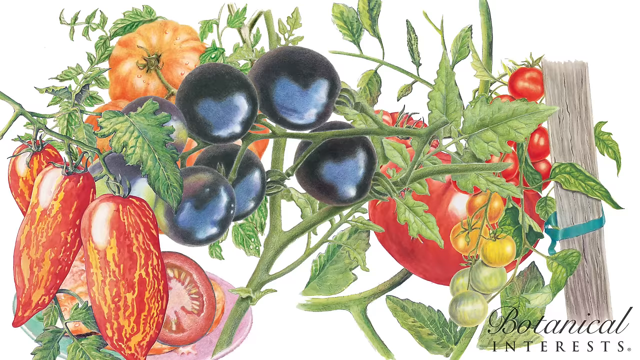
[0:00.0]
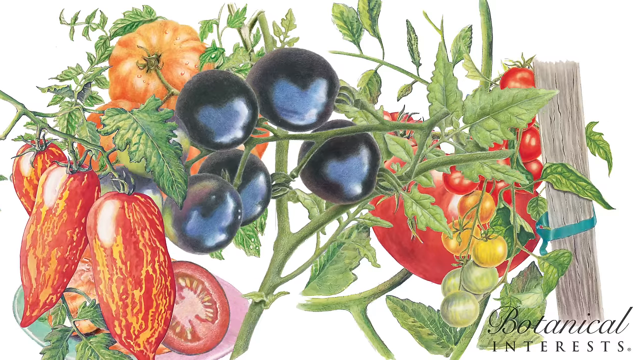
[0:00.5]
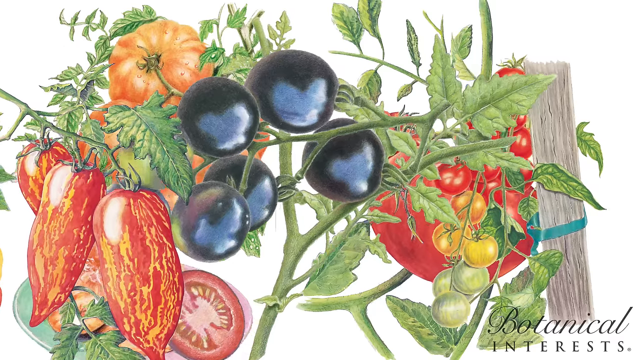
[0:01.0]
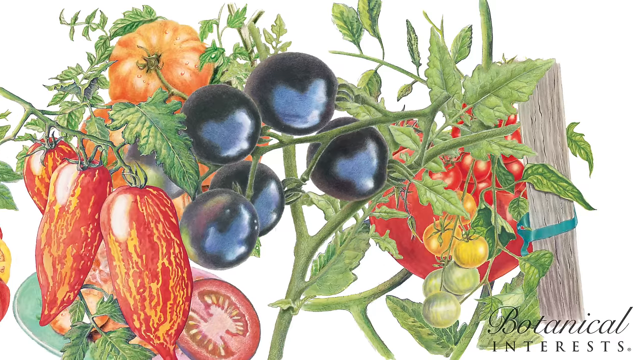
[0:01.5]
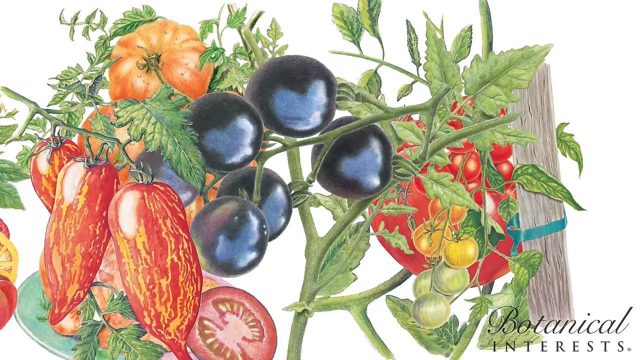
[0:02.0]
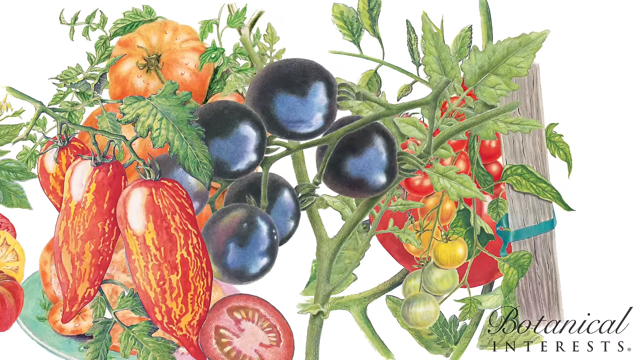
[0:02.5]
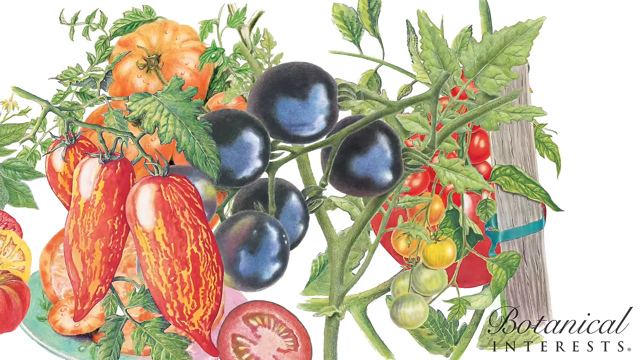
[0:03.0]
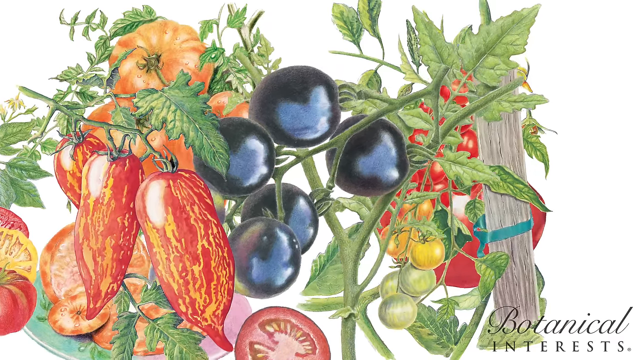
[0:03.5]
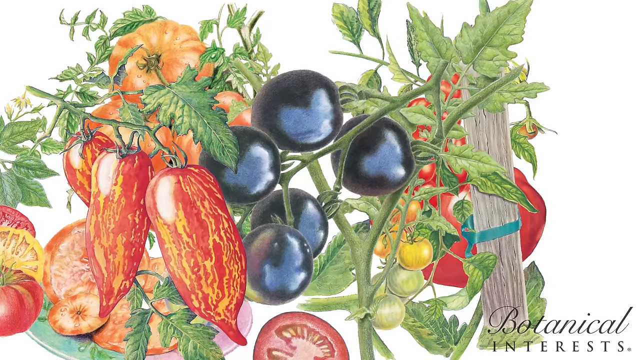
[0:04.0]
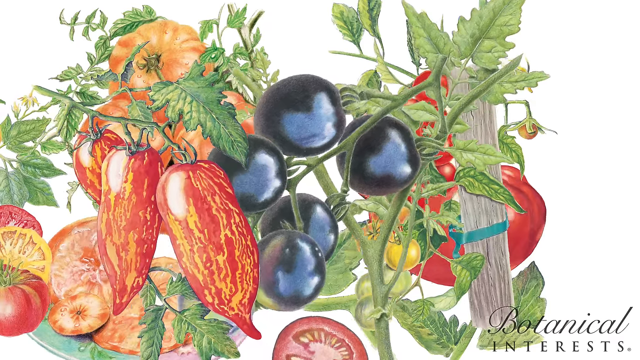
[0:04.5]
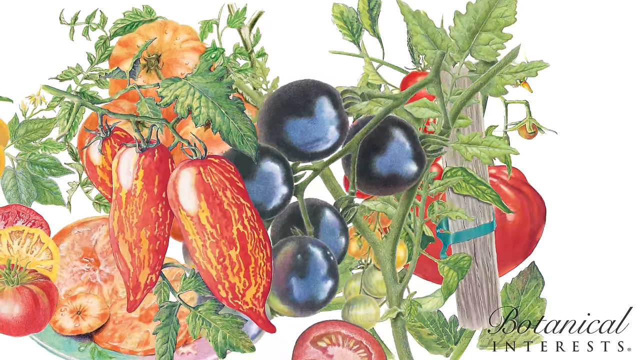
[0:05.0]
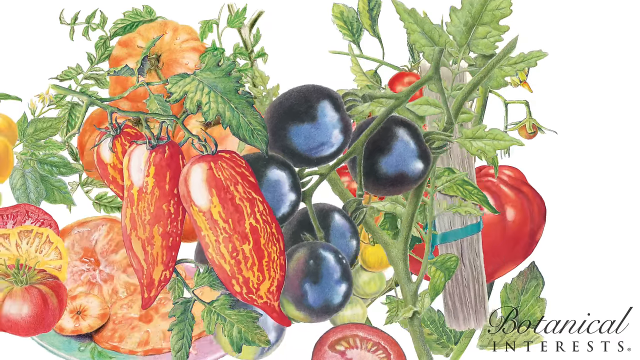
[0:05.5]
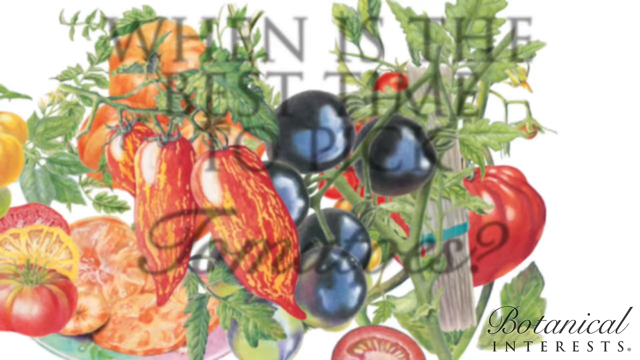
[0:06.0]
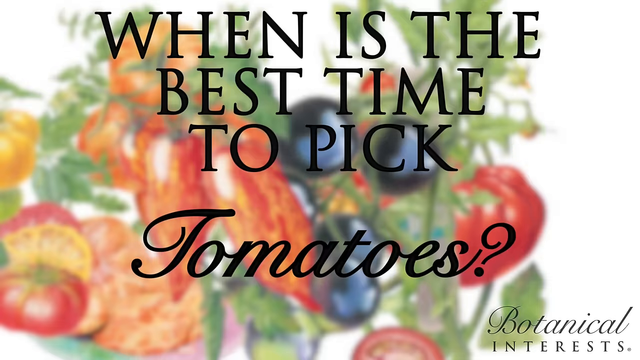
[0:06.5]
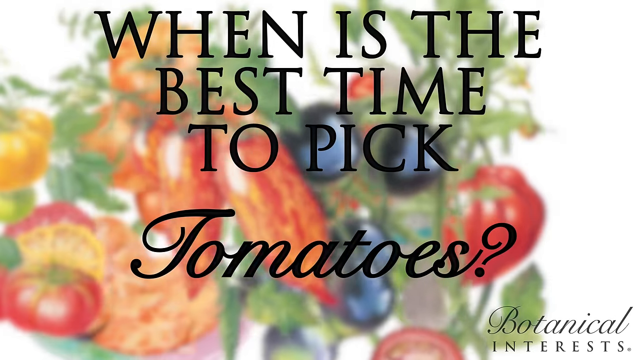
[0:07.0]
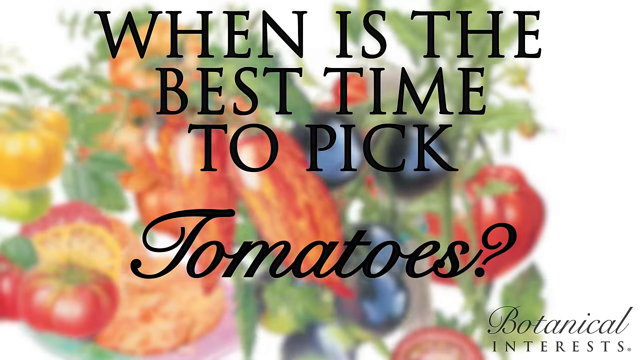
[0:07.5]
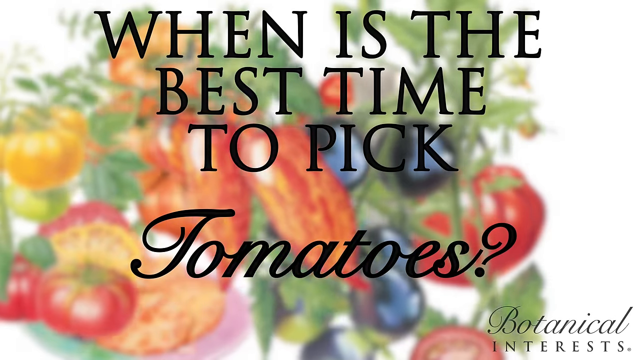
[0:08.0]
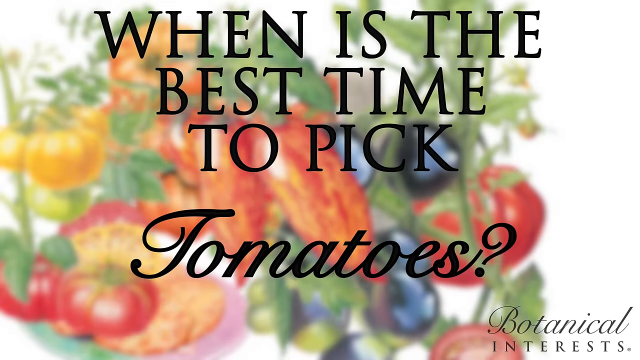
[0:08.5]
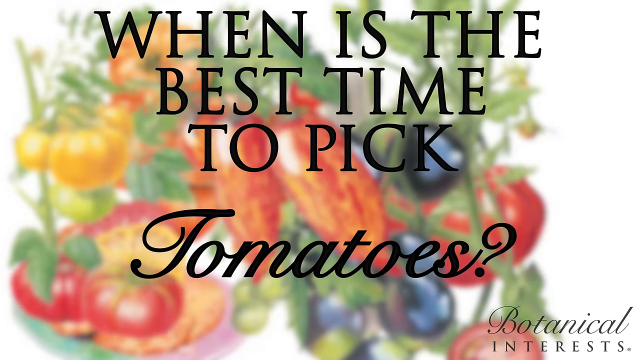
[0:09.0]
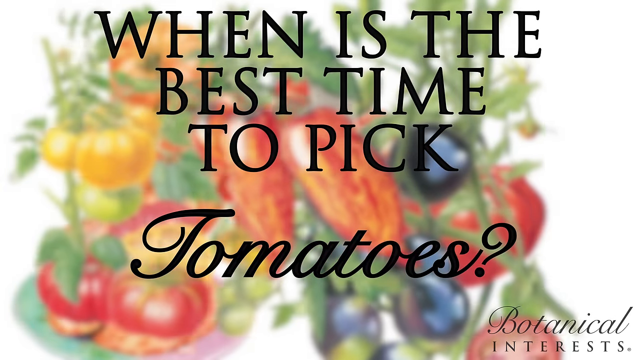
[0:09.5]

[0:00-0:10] The screen shows what looks like digital artwork of a greenhouse, with the kind of vegetables grown in a greenhouse or an allotment: berries, tomatoes and pumpkins. On the right-hand side is a wooden post with a blue ribbon tied around it. Everything in the image is moving. In the bottom right-hand corner are the words "botanical interests", and then "when is the best time to pick tomatoes" appears in big black font right across the screen. The artwork is done kind of like a coloured sketch in coloured pencils, with lots of shading that gives the illusion of light on the little black berries and the other vegetables.